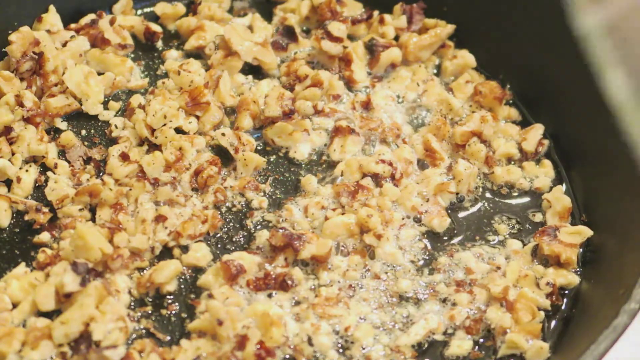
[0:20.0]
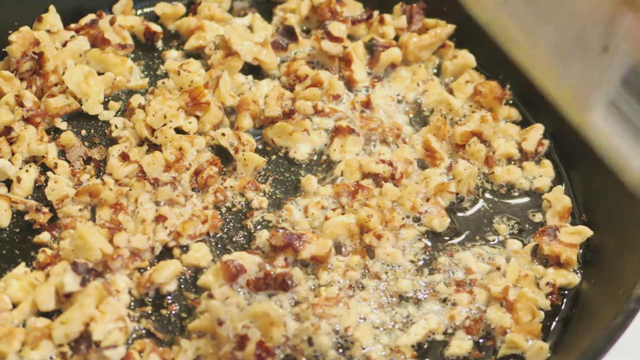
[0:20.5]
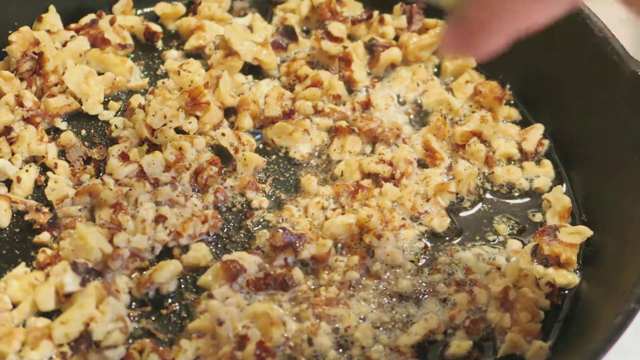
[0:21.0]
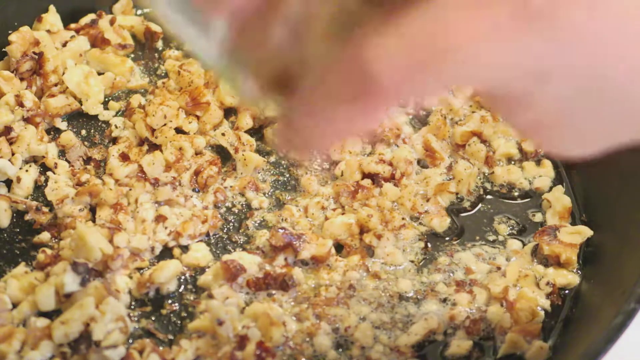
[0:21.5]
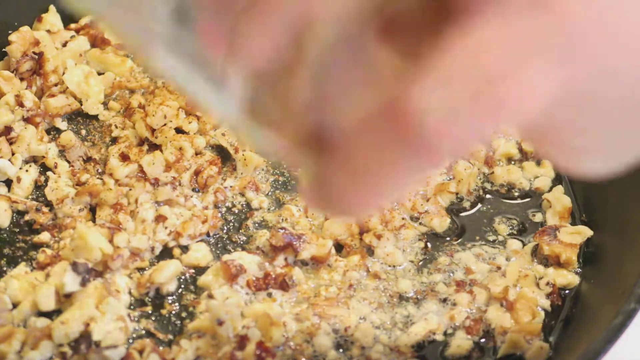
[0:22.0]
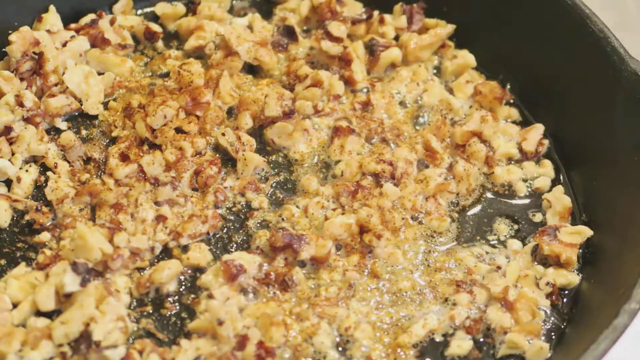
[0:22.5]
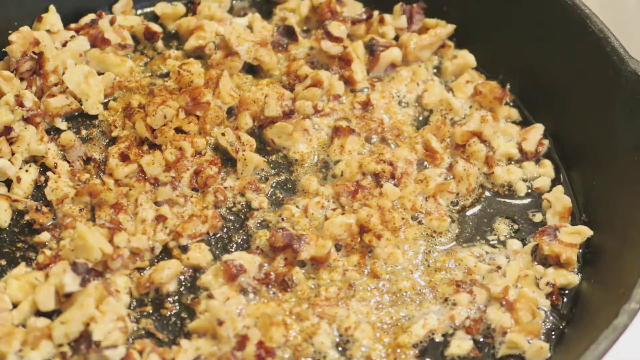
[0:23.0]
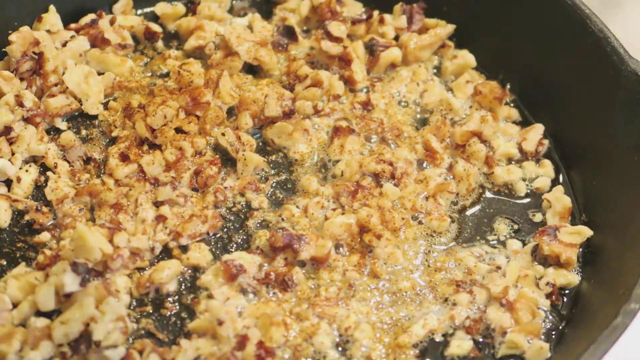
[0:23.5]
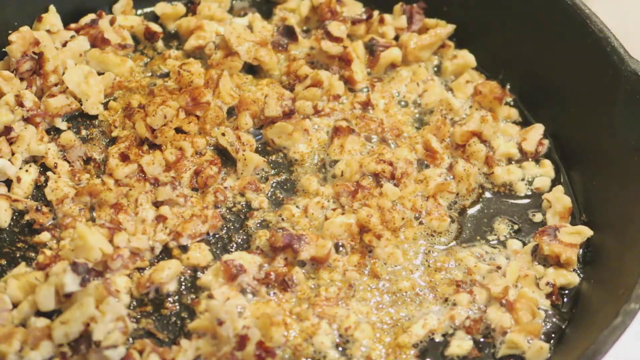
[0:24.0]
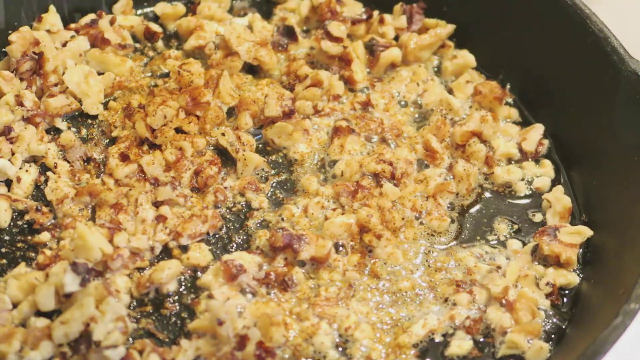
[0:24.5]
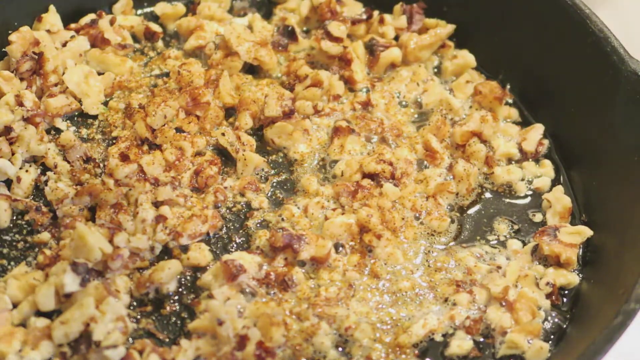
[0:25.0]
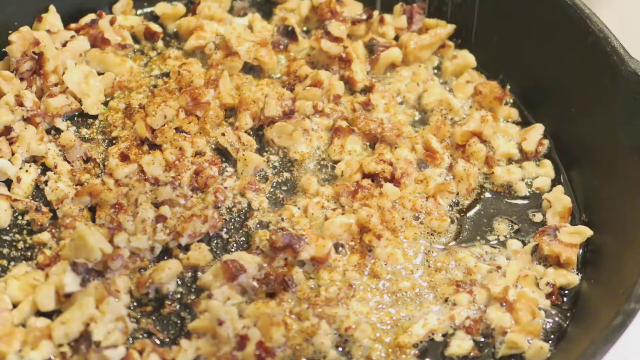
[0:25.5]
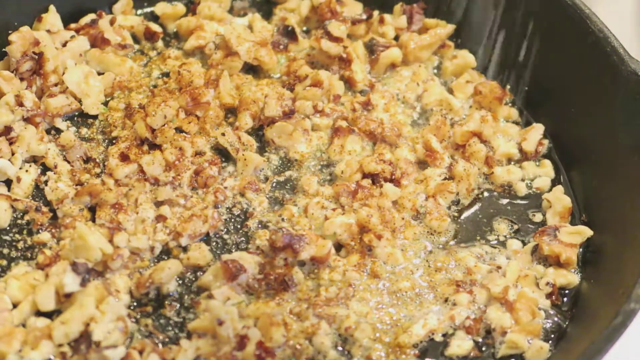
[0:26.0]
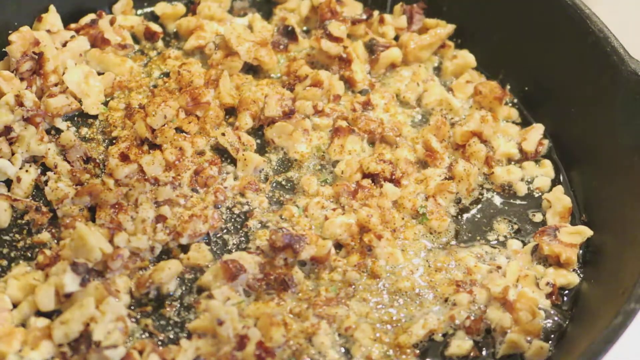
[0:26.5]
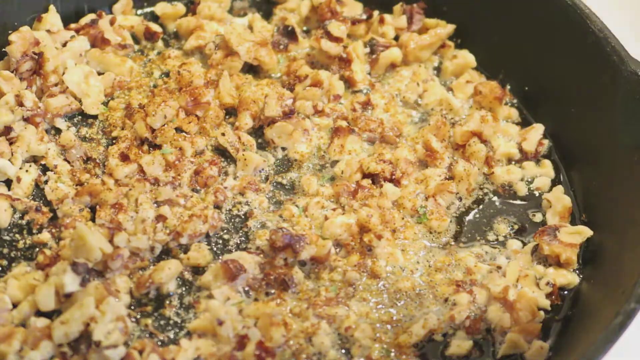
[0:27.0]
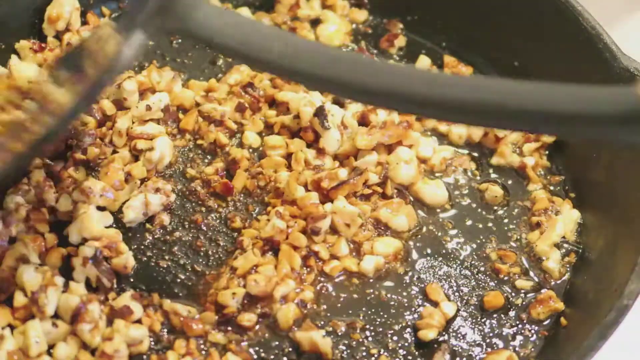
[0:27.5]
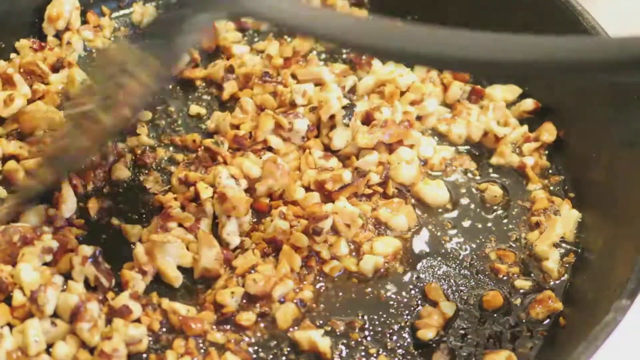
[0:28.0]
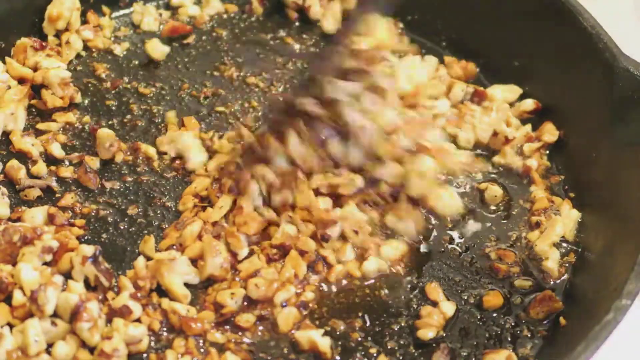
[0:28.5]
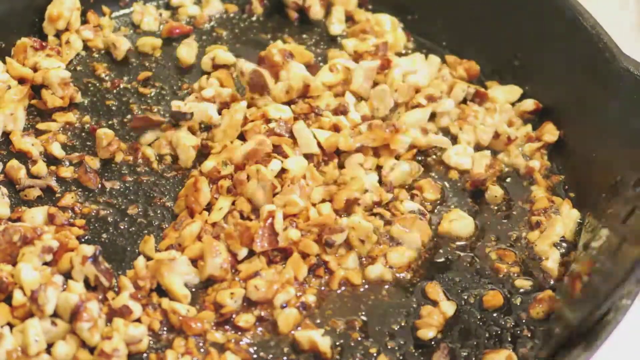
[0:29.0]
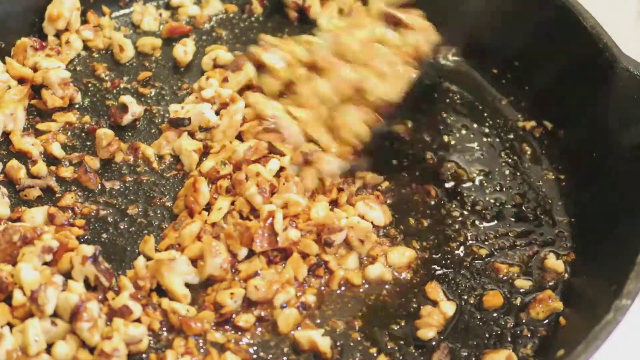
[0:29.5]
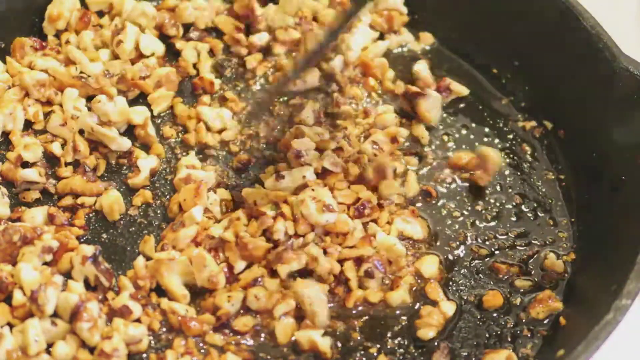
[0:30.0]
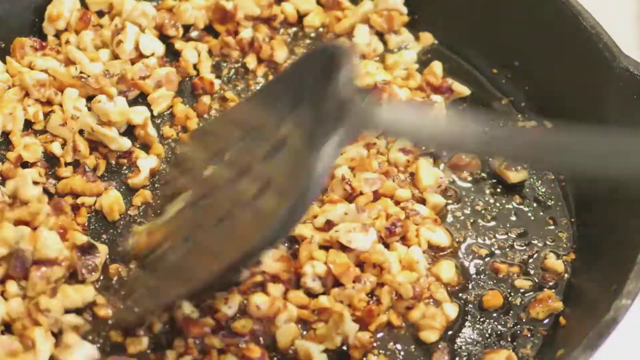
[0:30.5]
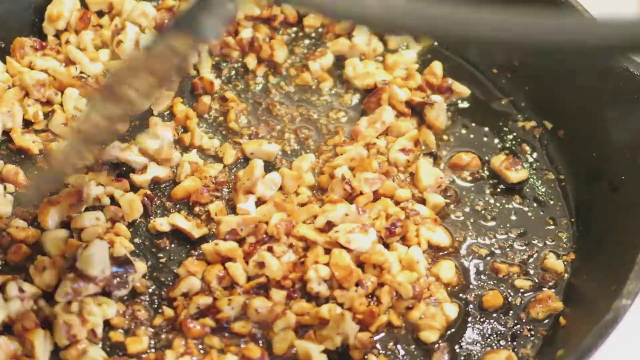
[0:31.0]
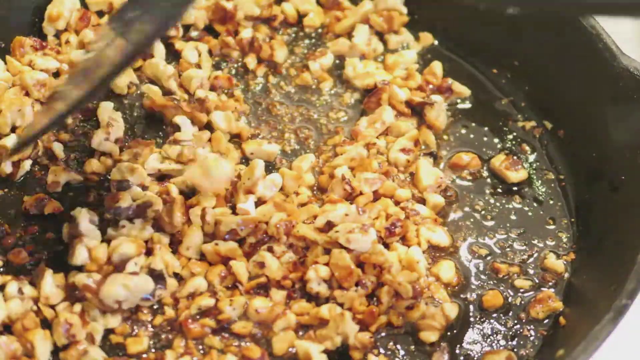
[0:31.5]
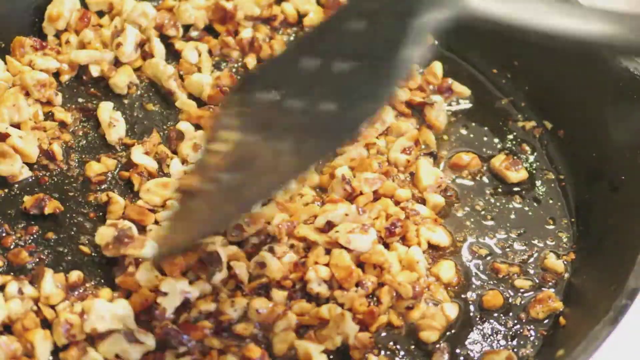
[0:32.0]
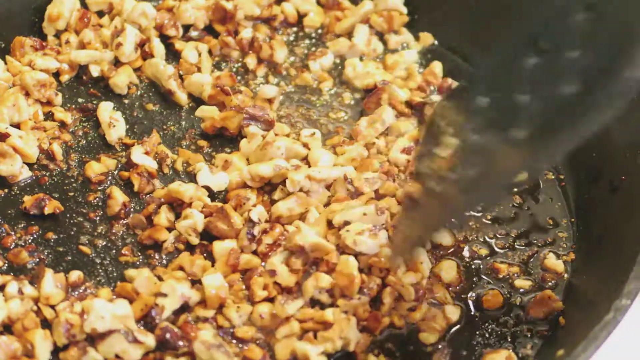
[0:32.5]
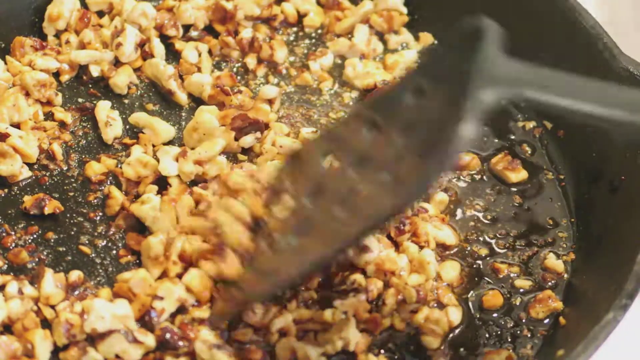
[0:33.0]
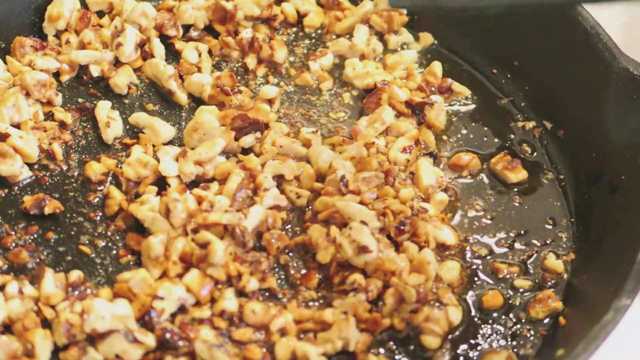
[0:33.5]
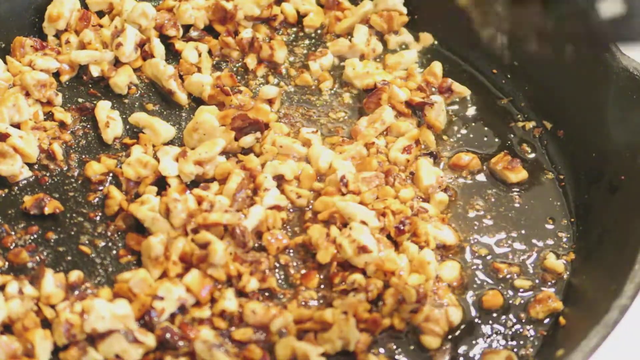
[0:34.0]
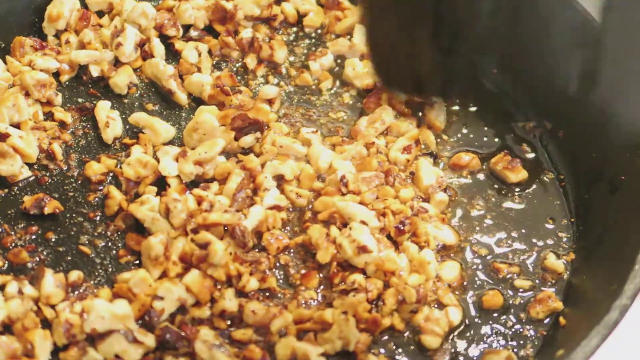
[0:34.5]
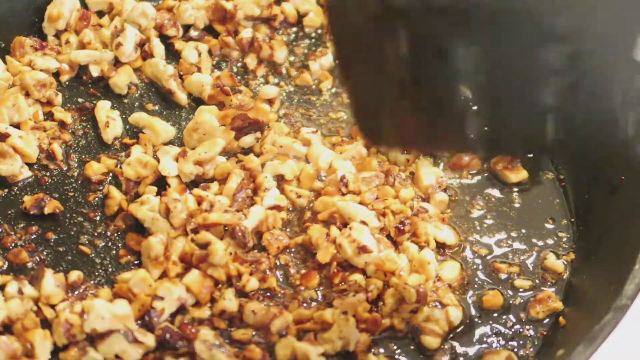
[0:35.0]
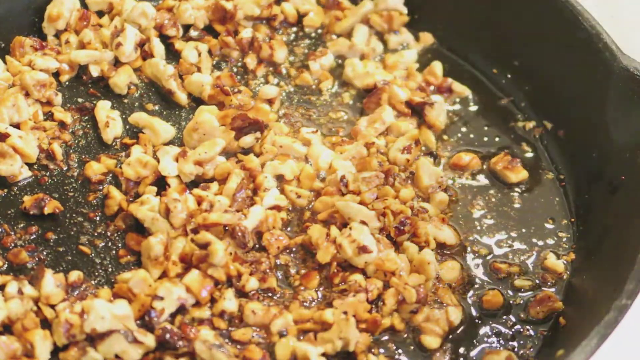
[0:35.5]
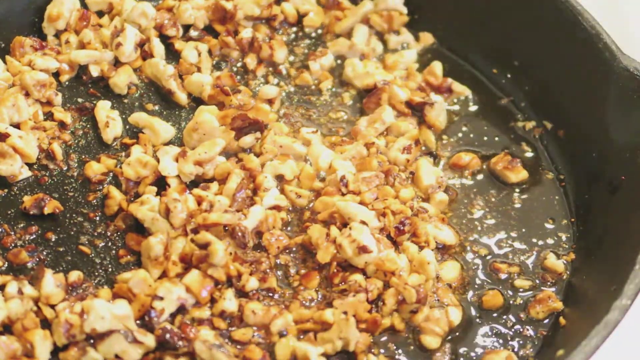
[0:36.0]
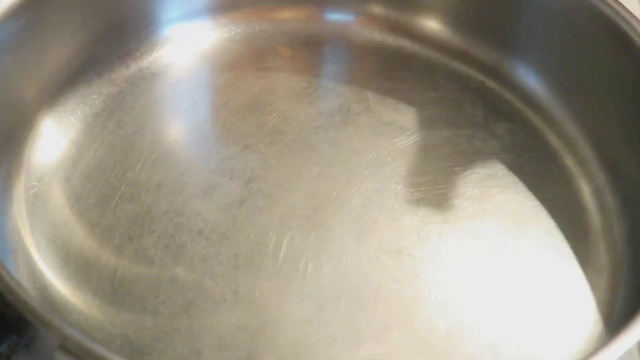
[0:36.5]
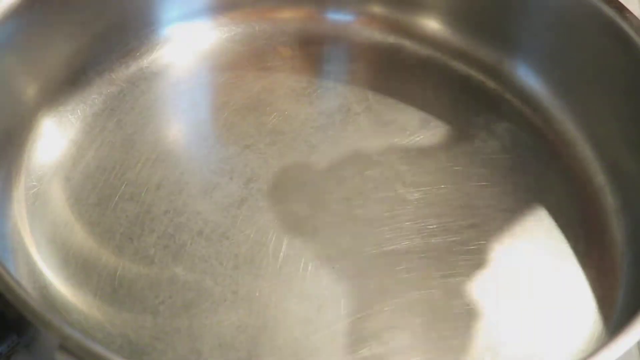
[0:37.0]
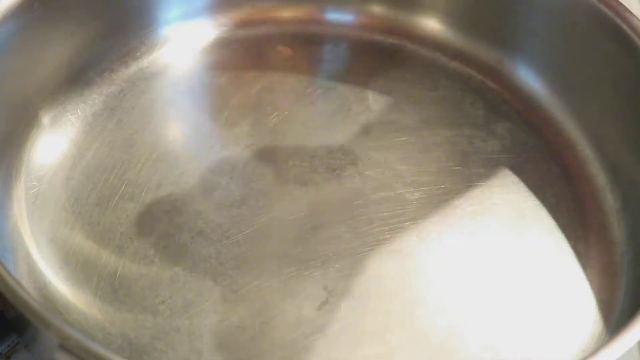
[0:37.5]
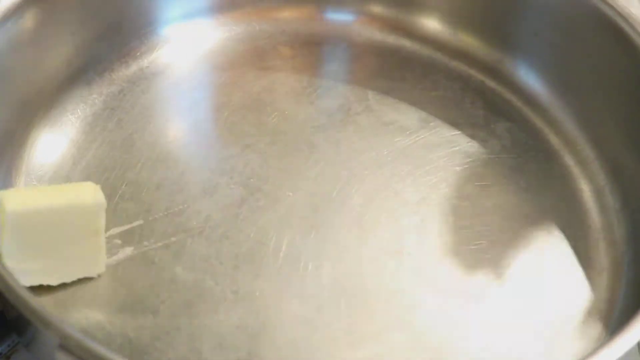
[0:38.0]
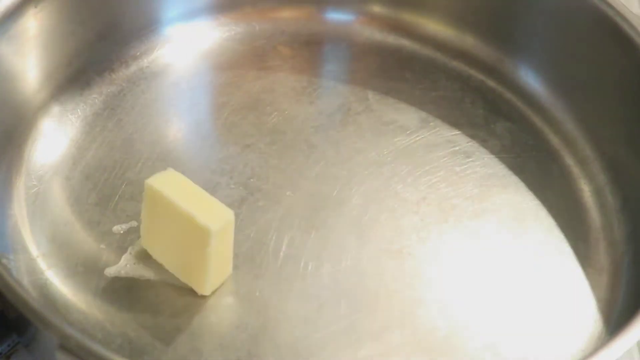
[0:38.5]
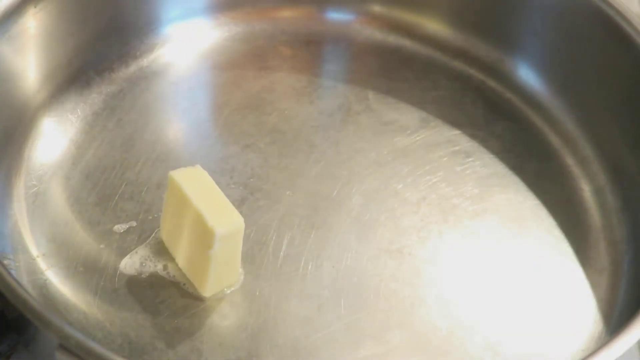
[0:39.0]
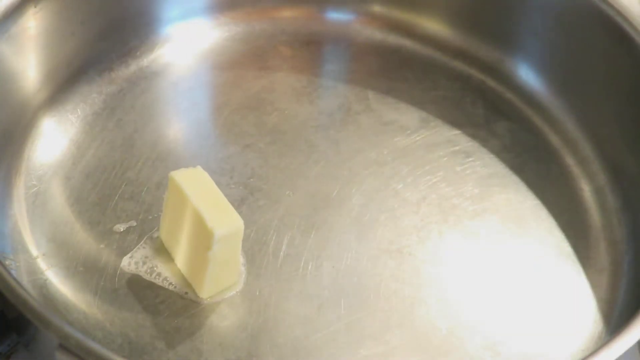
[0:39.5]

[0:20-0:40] The chopped nuts are put into oil, and a plastic spoon is in use.